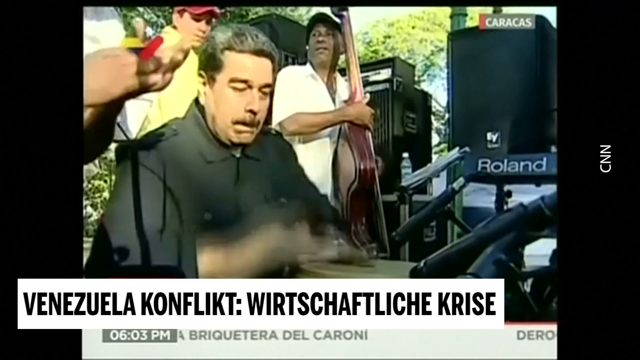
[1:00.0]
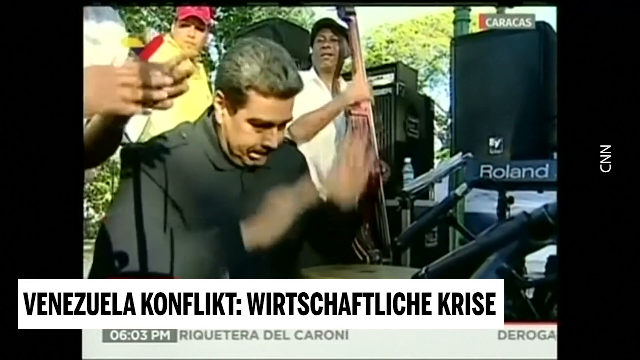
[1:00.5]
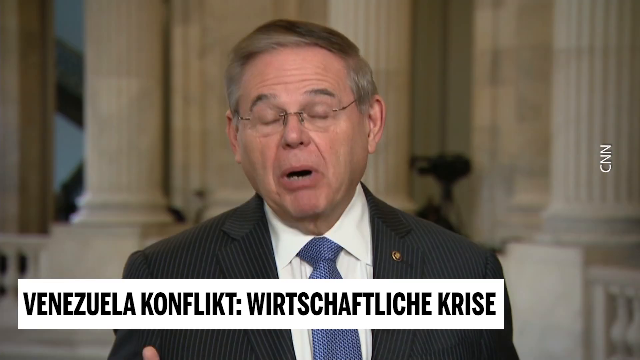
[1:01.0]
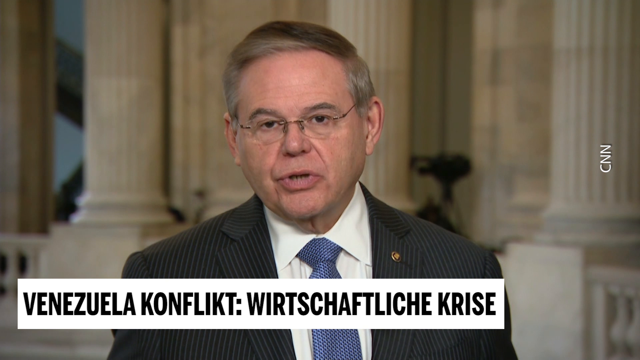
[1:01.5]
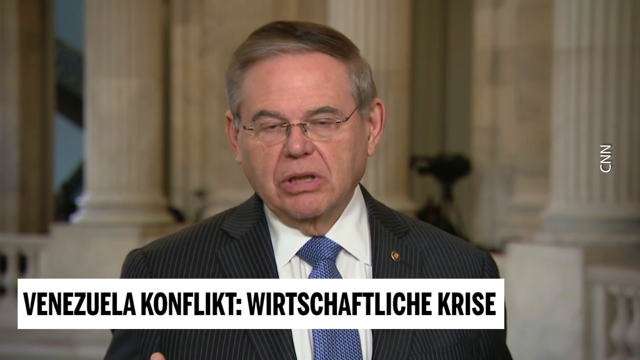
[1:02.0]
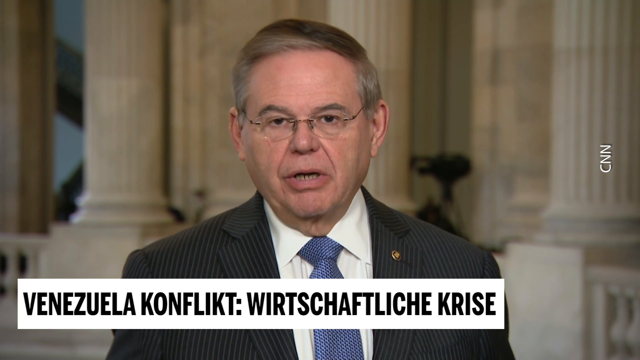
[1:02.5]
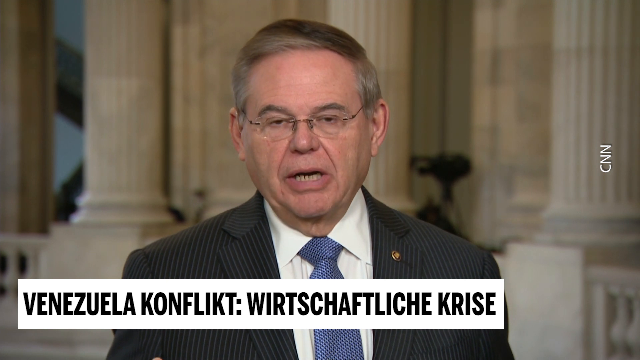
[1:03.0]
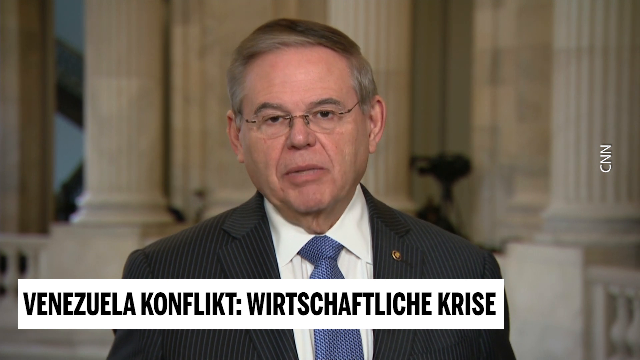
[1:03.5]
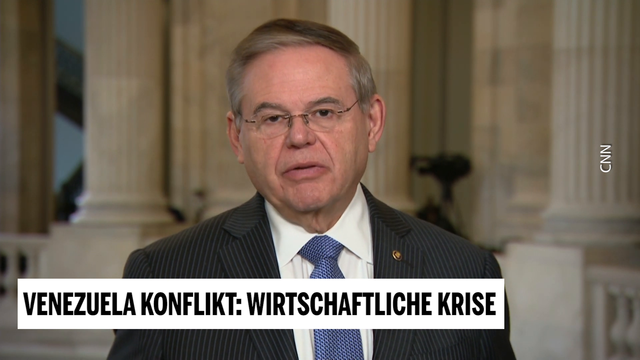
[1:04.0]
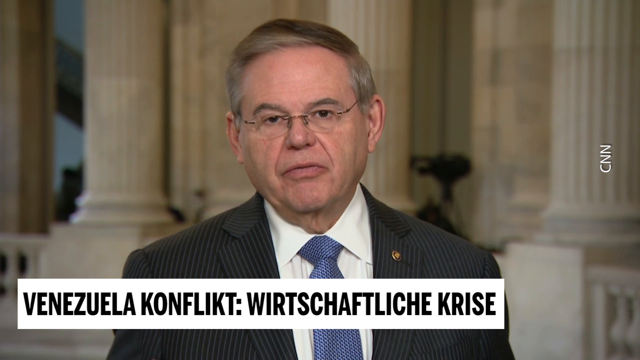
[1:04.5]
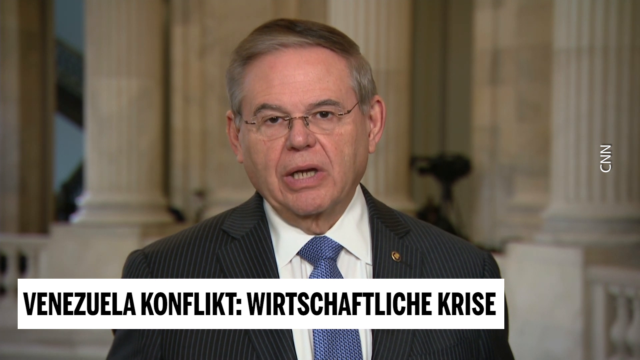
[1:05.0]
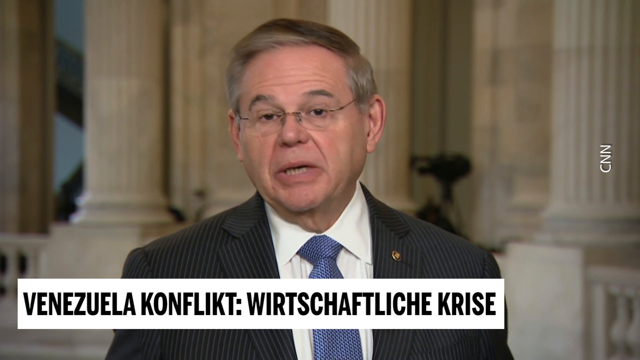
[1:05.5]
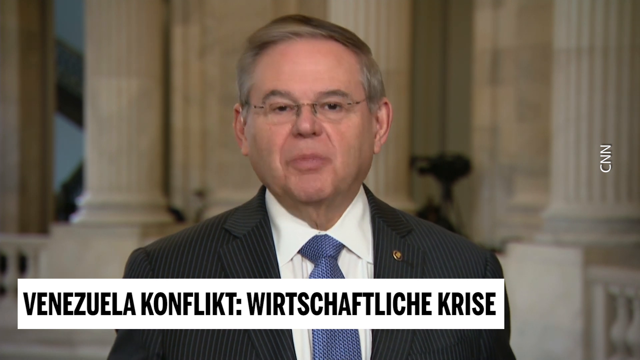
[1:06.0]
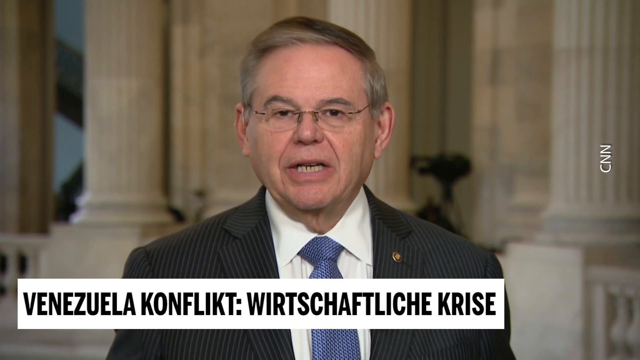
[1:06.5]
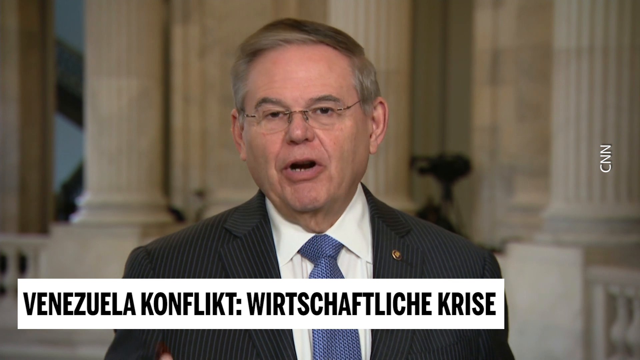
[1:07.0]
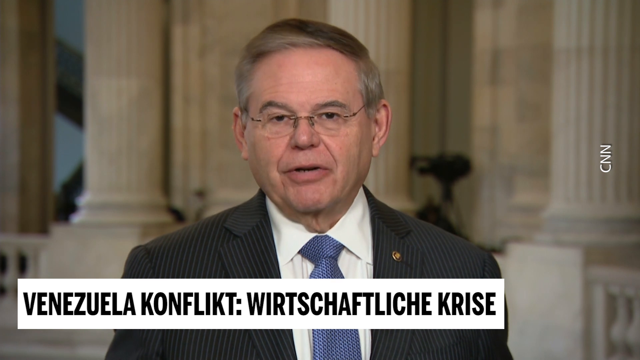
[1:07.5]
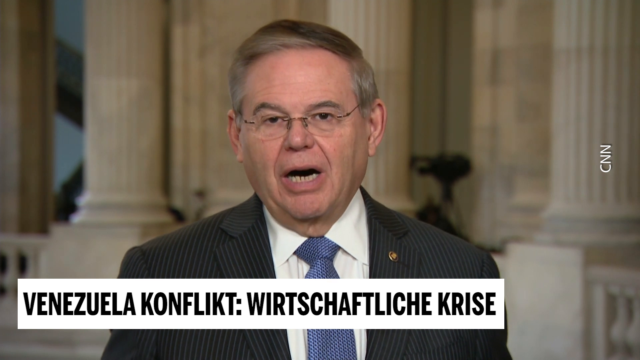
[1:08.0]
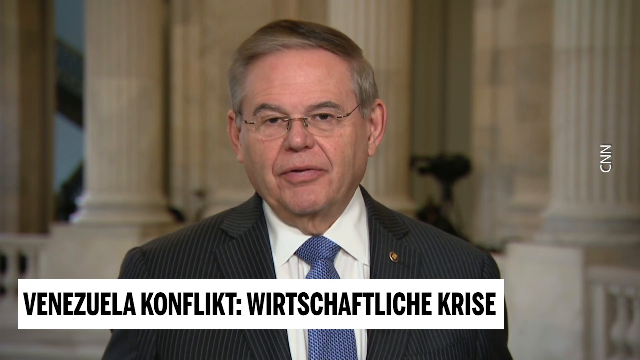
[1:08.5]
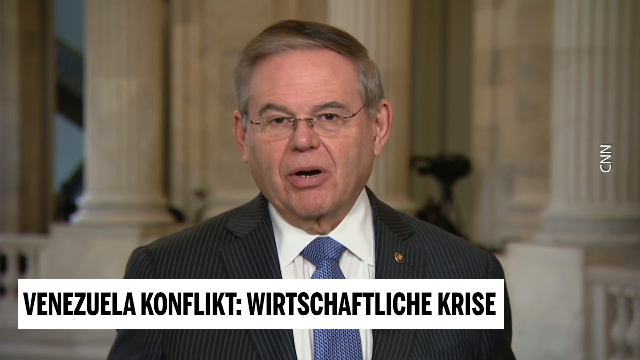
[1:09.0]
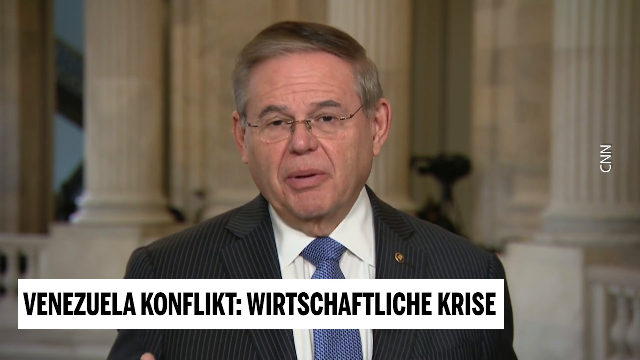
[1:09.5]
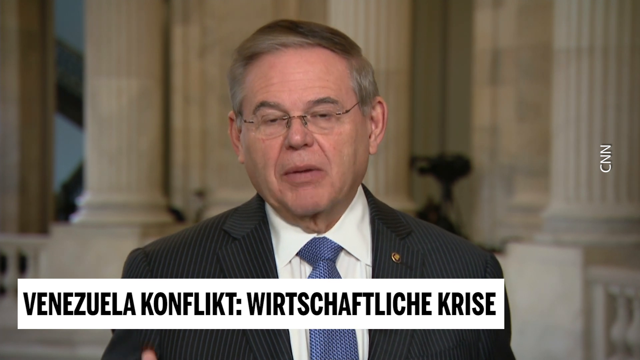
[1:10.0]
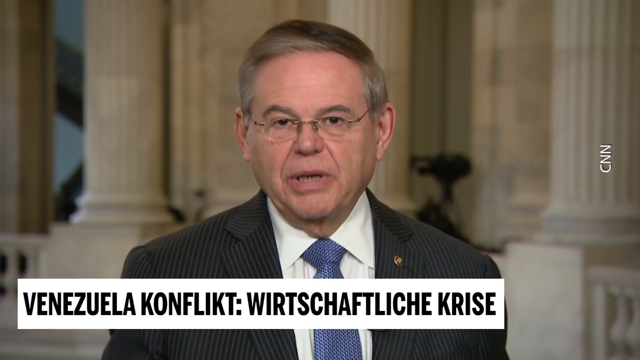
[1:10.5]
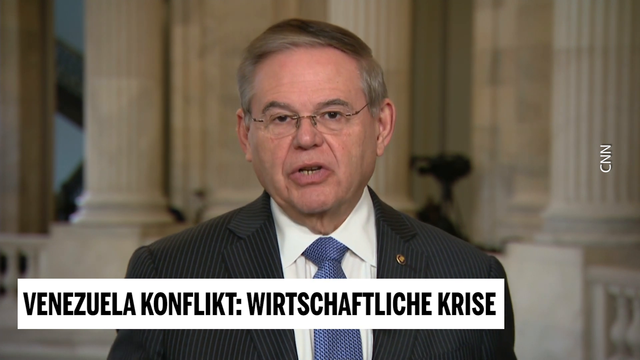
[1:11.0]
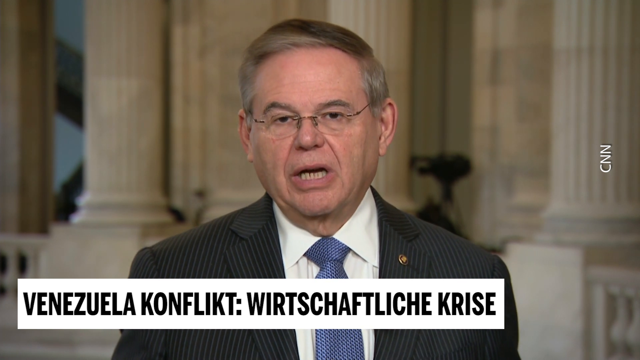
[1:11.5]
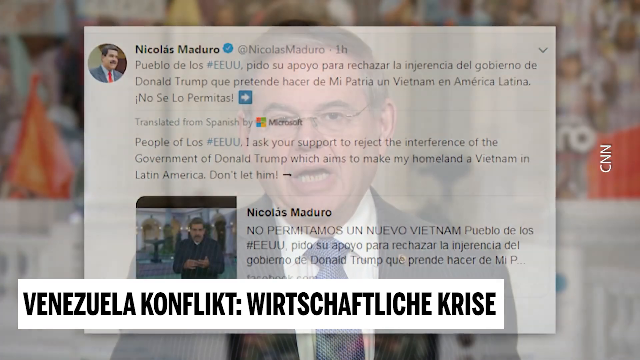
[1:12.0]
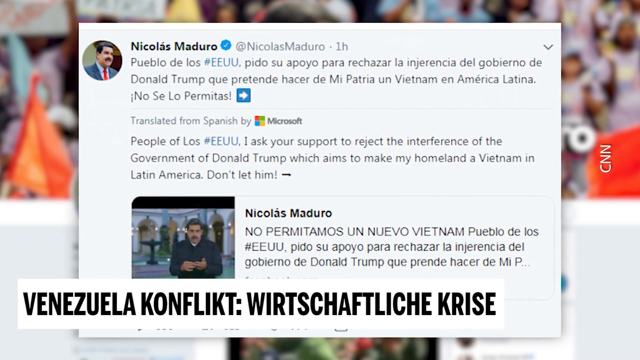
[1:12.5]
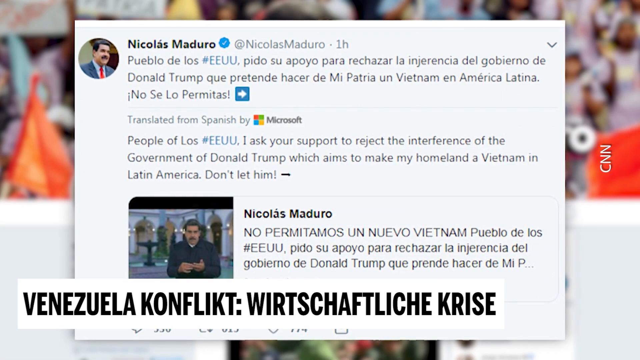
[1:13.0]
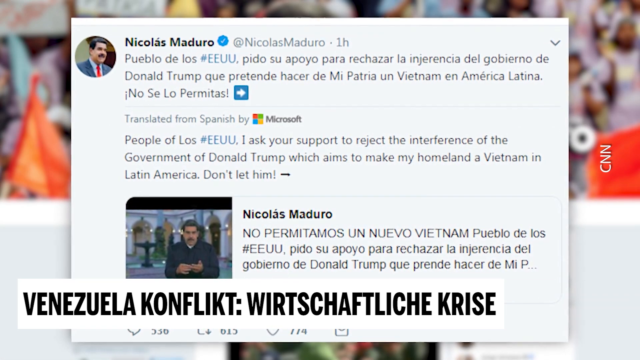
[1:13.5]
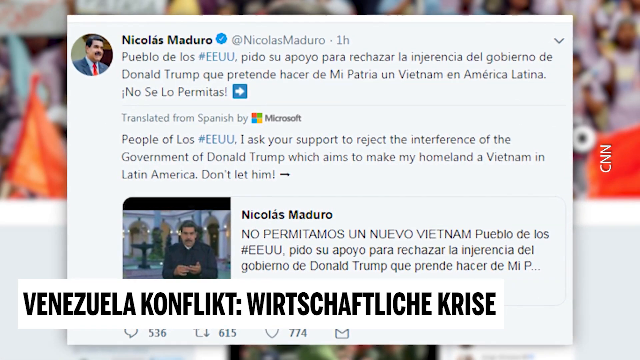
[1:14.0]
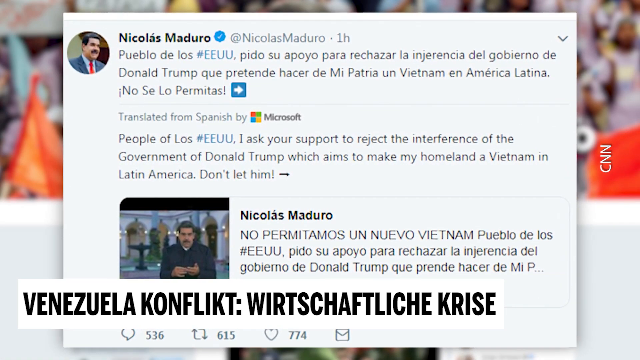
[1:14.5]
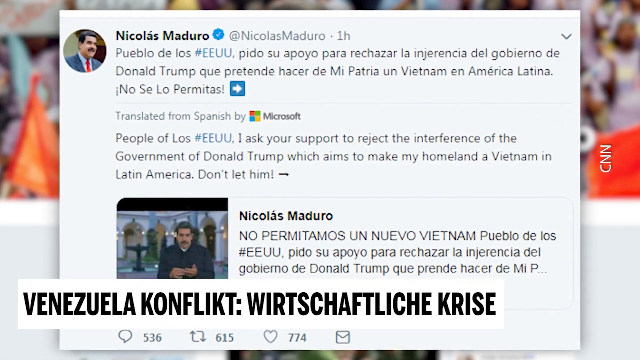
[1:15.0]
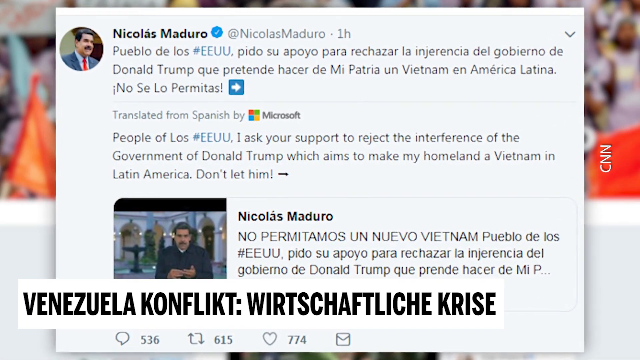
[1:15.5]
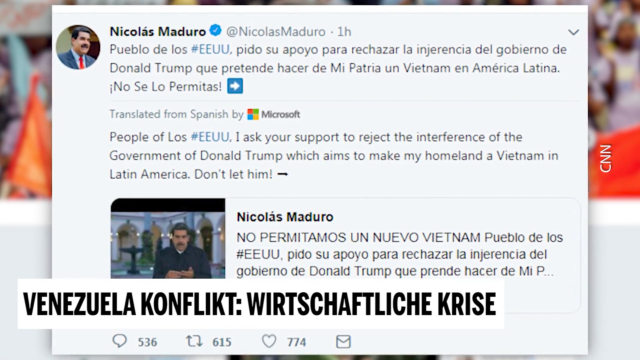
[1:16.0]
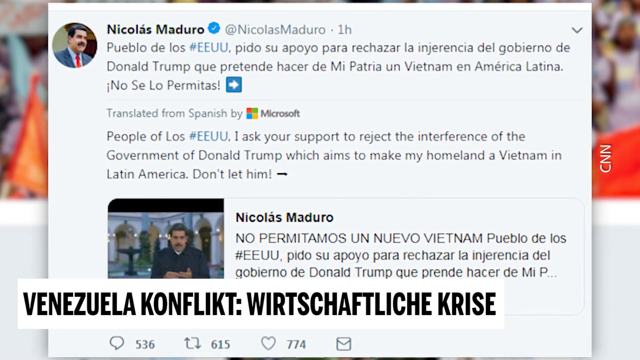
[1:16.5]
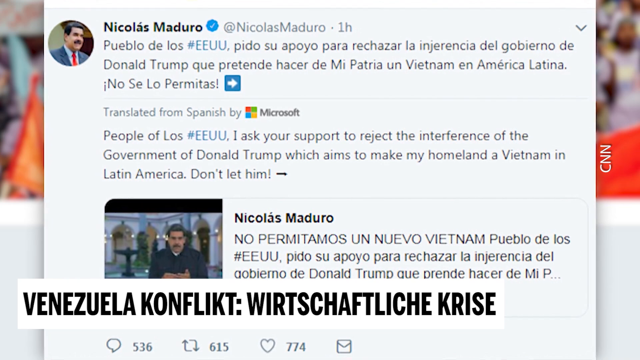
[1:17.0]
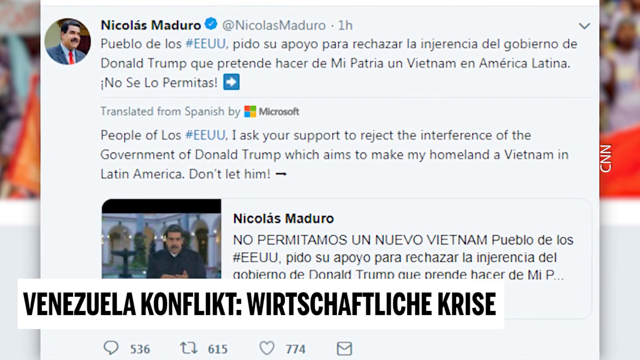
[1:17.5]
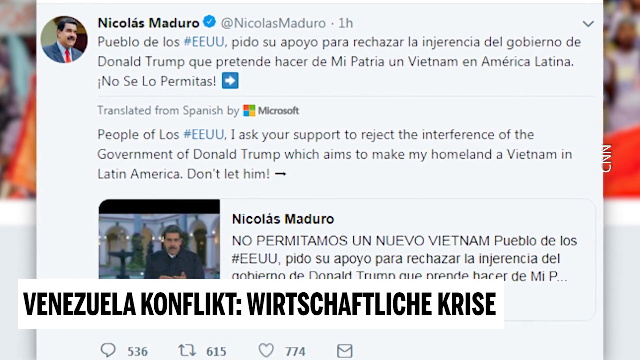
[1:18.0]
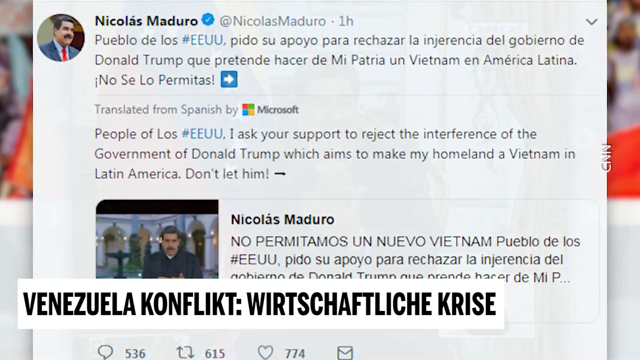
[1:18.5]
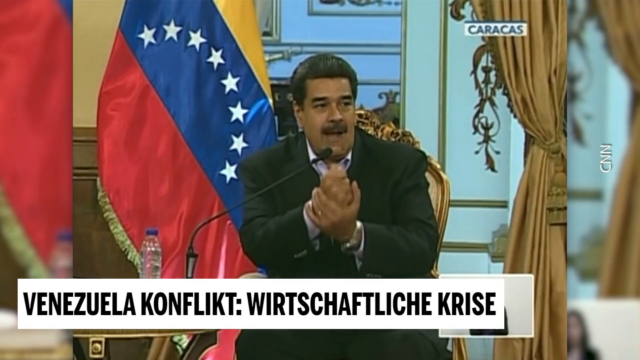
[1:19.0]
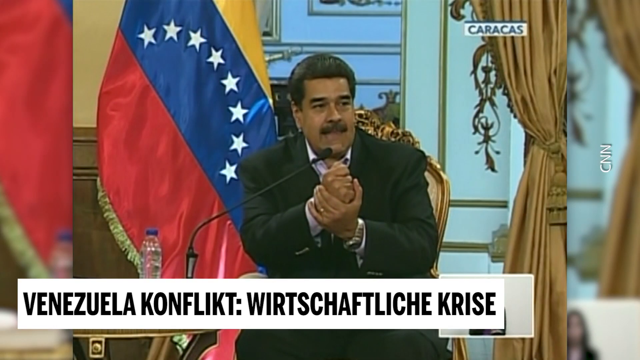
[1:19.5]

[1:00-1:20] President Maduro plays a drum in an outdoor environment. Next, a white man with short hair gives an interview to a TV channel; he wears a black suit, a blue tie and sunglasses. Behind him is a big building with many white pillars. A tweet by Nicolás Maduro follows, written in Spanish and translated, reading in part: "I ask your support to reject the interference of the government of Donald Trump which aims to make my homeland a Vietnam in Latin America. Don't let him." Then President Maduro speaks inside a house with a Venezuelan flag displayed next to him.